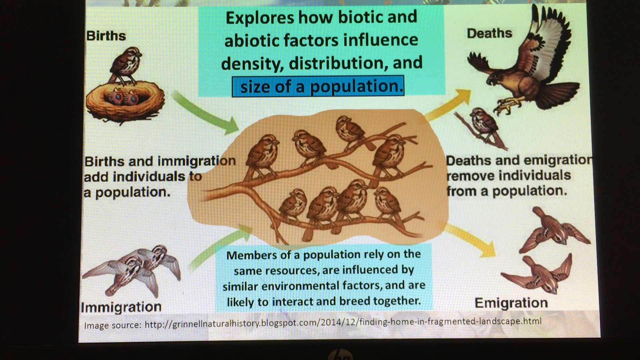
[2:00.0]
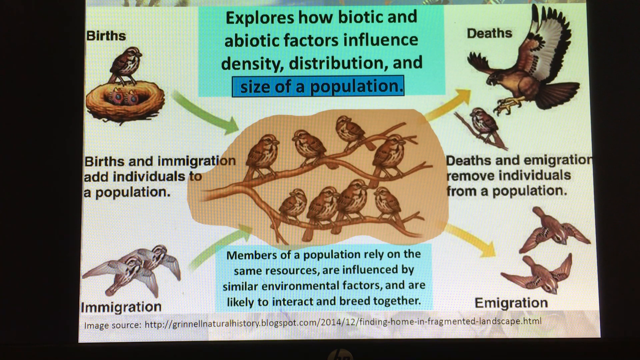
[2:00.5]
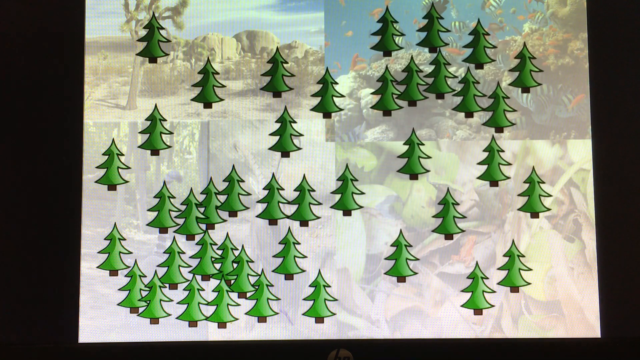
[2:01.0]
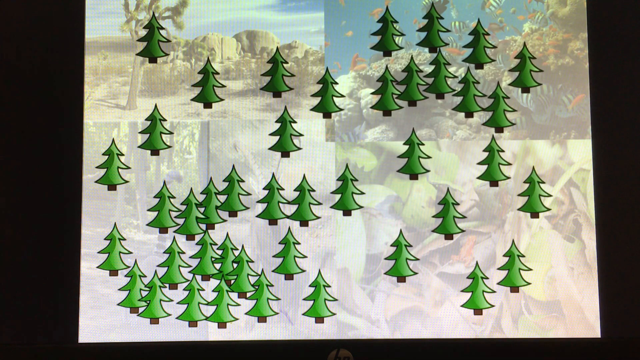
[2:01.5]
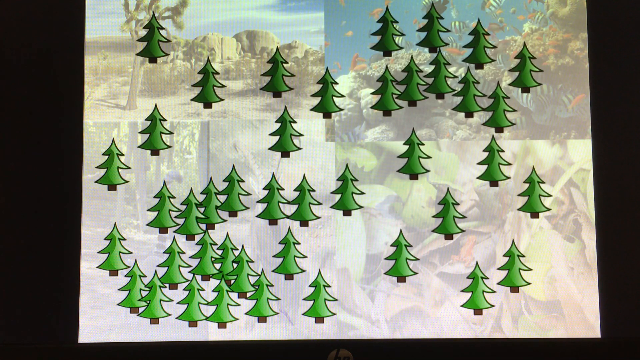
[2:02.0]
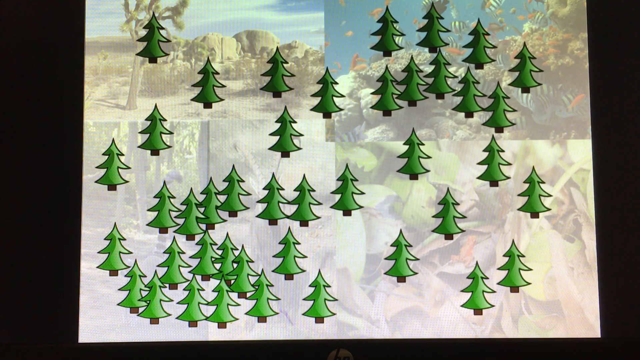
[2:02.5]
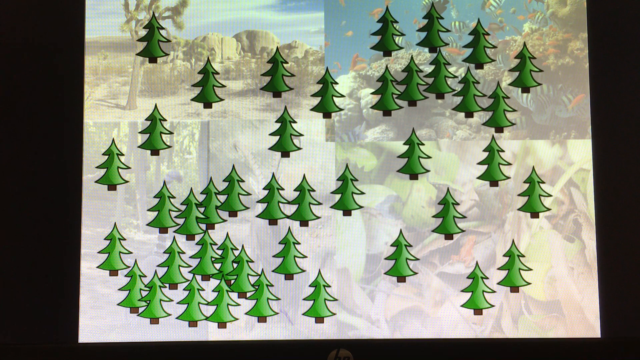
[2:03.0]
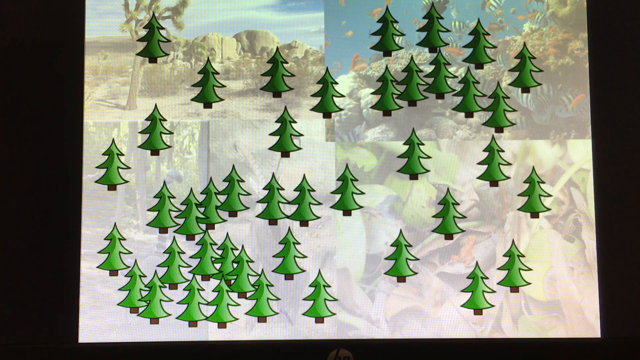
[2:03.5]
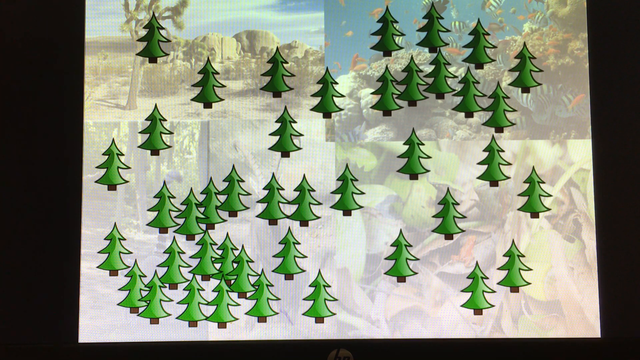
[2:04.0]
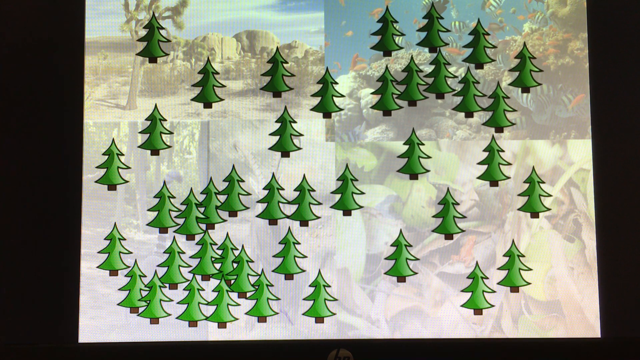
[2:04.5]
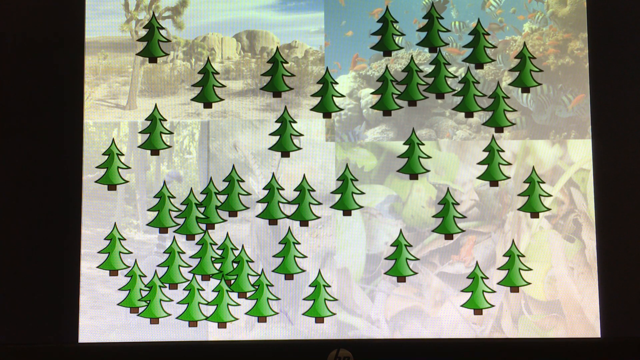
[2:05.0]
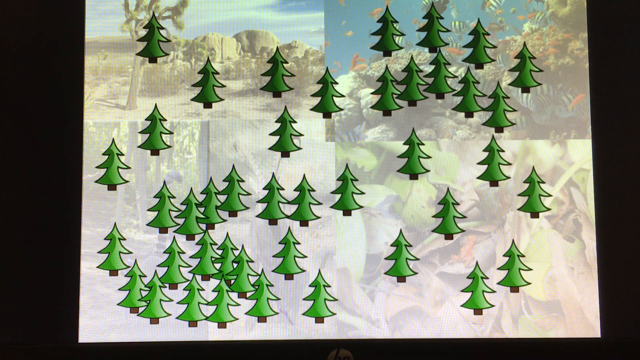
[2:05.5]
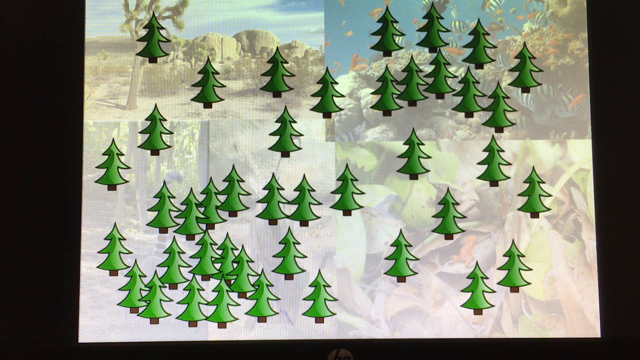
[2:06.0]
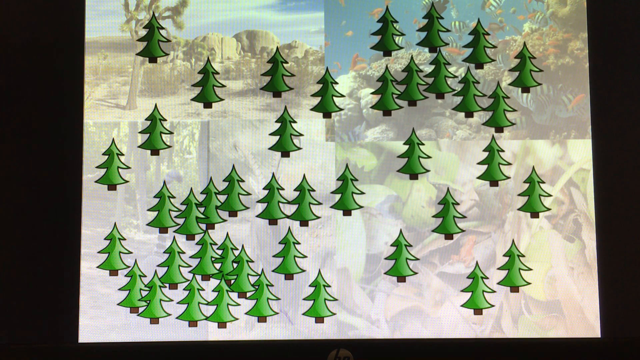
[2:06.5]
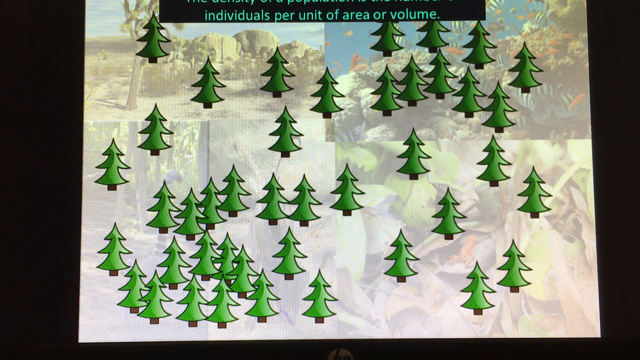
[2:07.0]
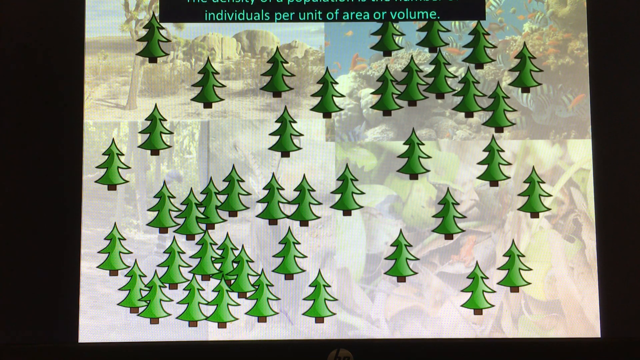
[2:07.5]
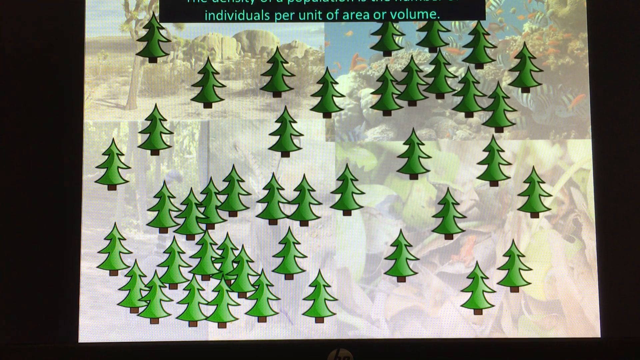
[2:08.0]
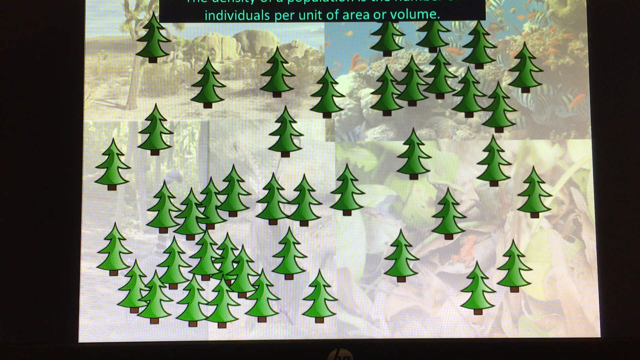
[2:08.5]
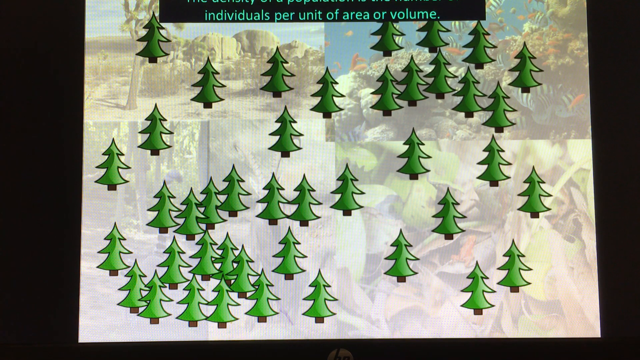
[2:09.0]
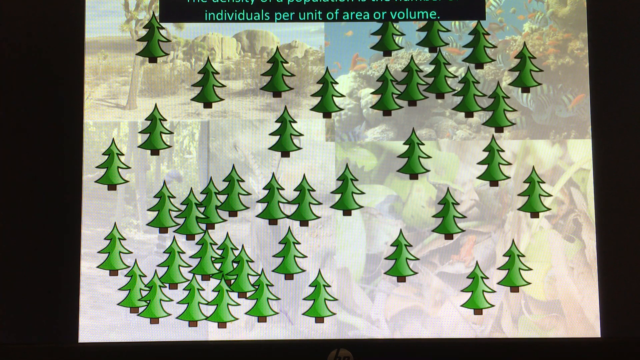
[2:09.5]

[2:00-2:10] The slide changes to one whose background looks like a forest. In the foreground are a bunch of small animated trees, all green, that look kind of like Christmas trees. The top line of text is cut off in the recording and cannot be read. Below it, the text says "individuals per unit of area or volume."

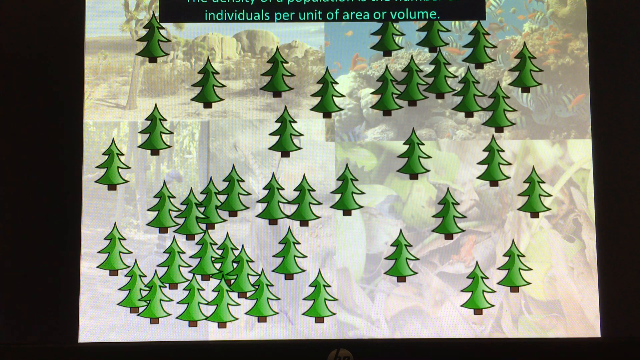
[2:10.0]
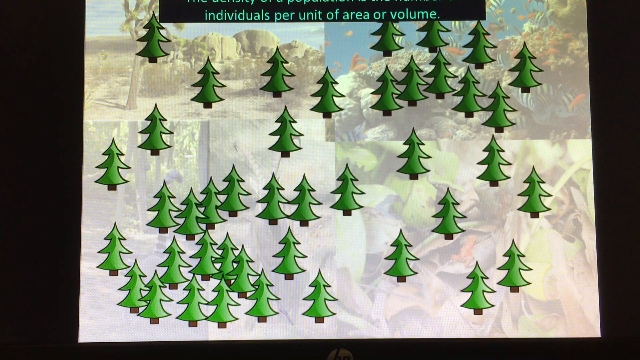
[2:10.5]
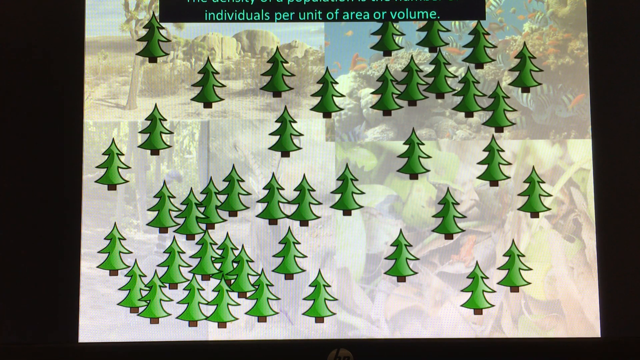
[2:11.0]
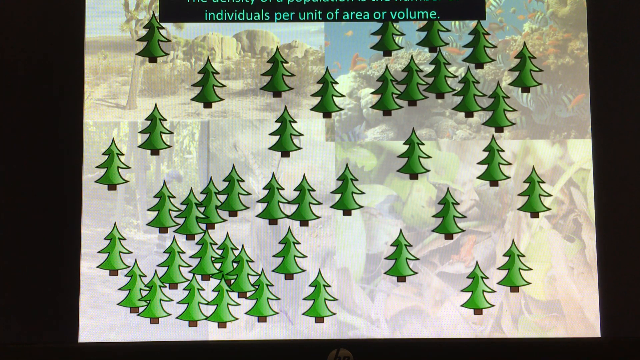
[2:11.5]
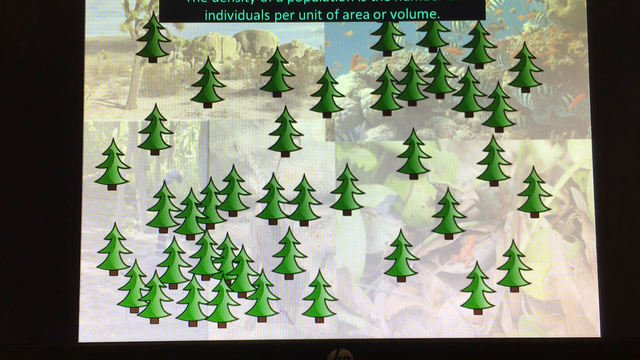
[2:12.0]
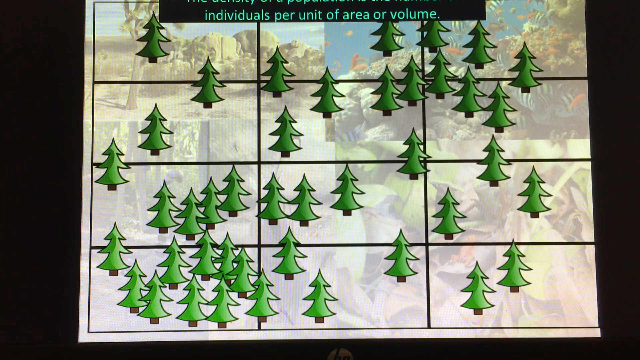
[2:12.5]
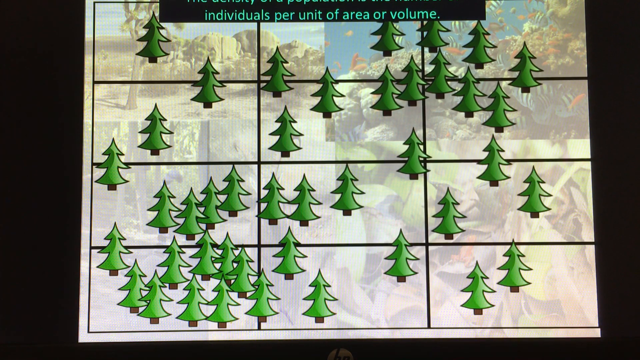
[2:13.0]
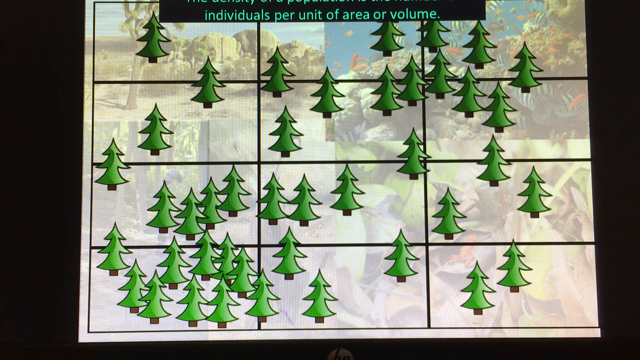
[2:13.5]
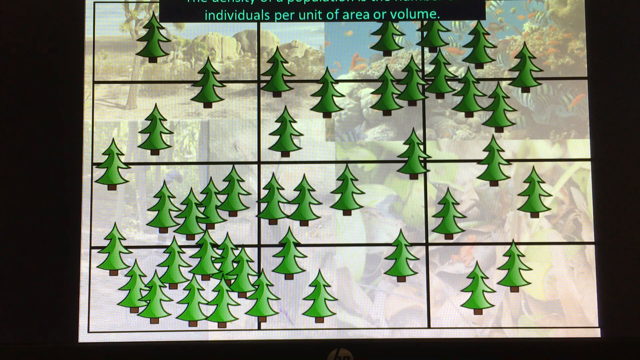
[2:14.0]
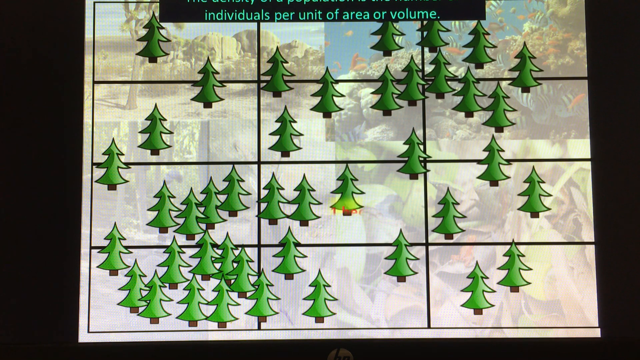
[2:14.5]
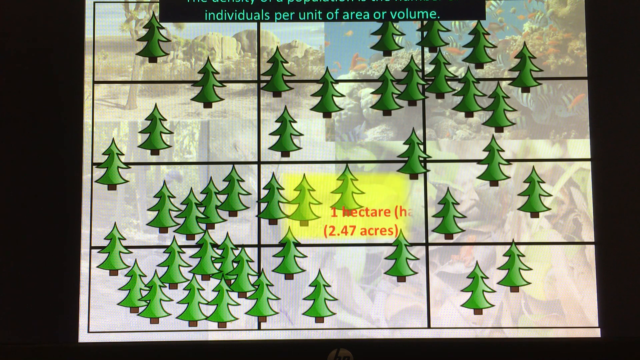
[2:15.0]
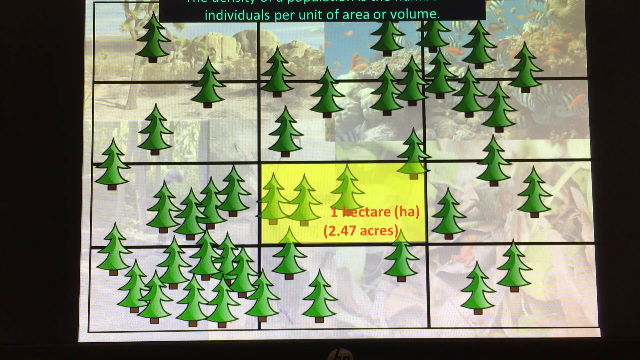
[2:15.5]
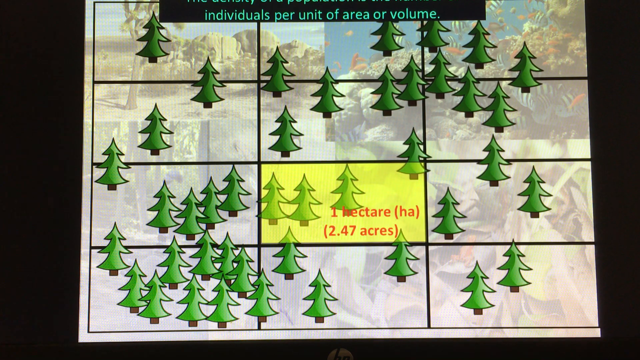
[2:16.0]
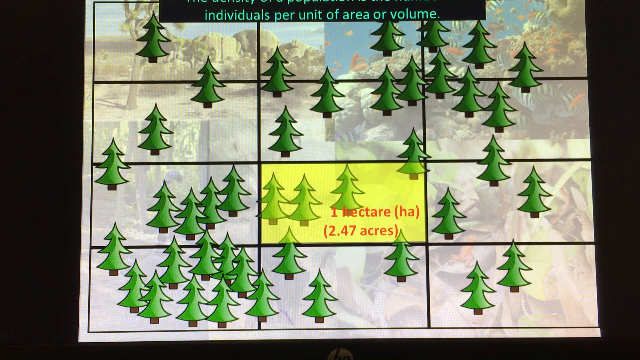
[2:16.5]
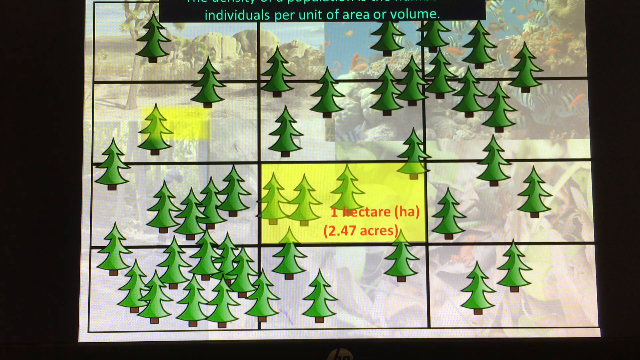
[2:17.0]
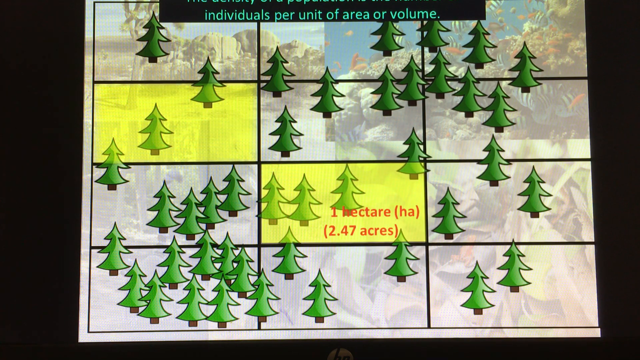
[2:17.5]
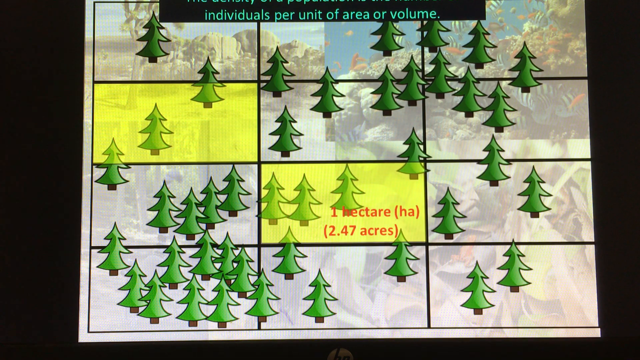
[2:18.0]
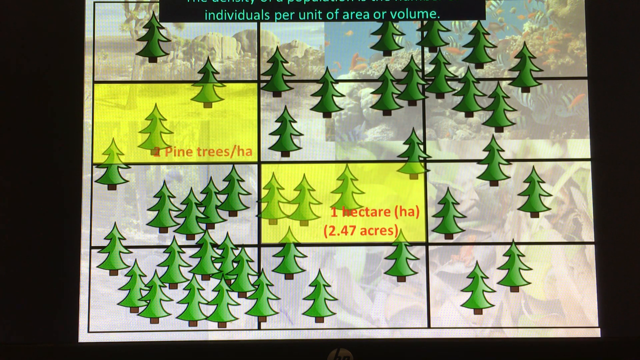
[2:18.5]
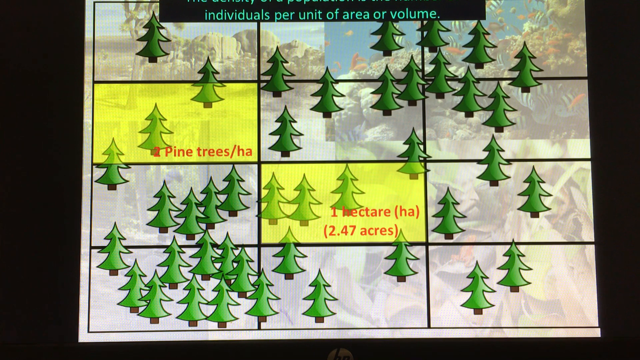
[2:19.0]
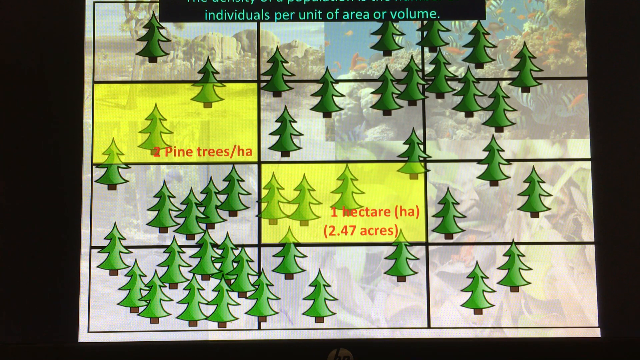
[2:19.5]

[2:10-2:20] The slide's background shows a bunch of pictures of forests and environments, while the foreground holds probably 30 to 40 animated trees that look like Christmas trees. At the very top is a statement that is cut off; the only readable part is "individuals per unit of area or volume." The picture is then divided into a 3x4 grid. The square two to the left and three down is filled in yellow with the text "1 hectare = 2.47 acres." Then the box up and to the left of that one is filled in and says "2 pine trees per hectare."